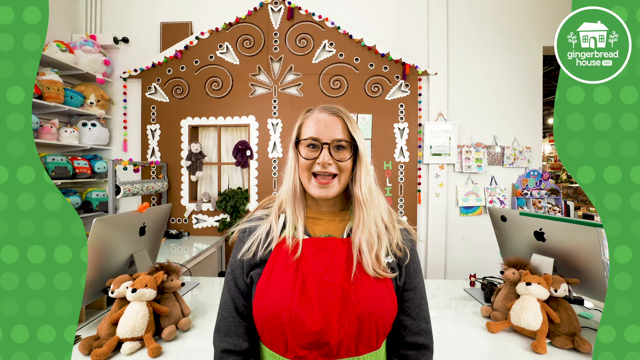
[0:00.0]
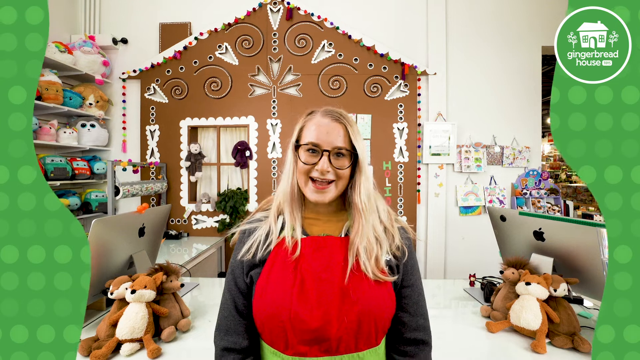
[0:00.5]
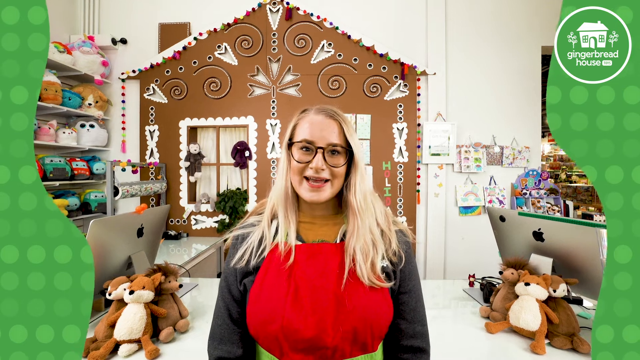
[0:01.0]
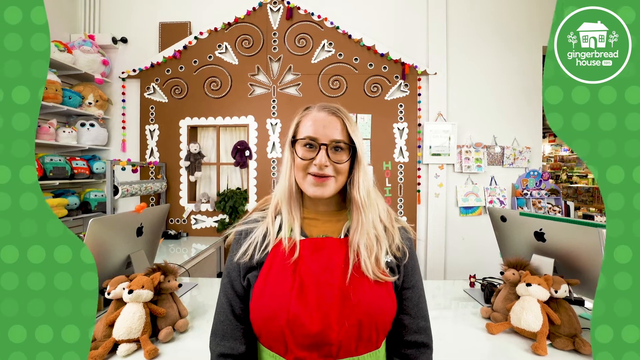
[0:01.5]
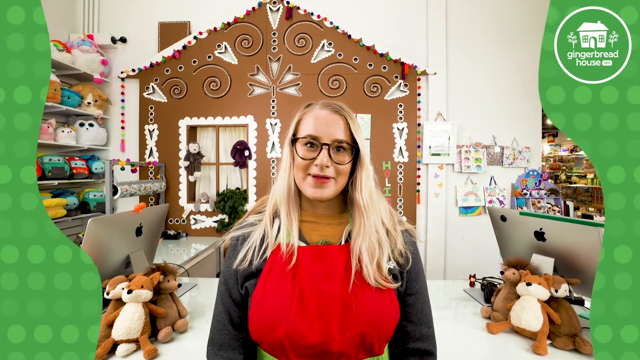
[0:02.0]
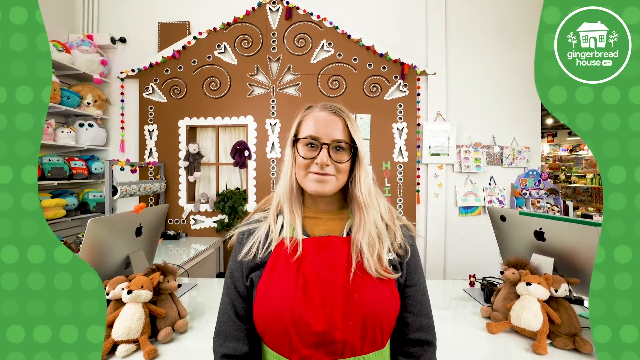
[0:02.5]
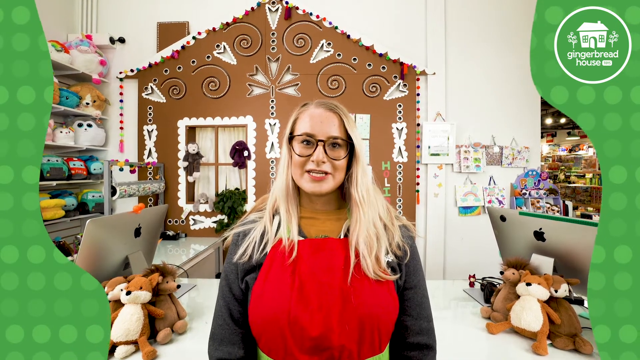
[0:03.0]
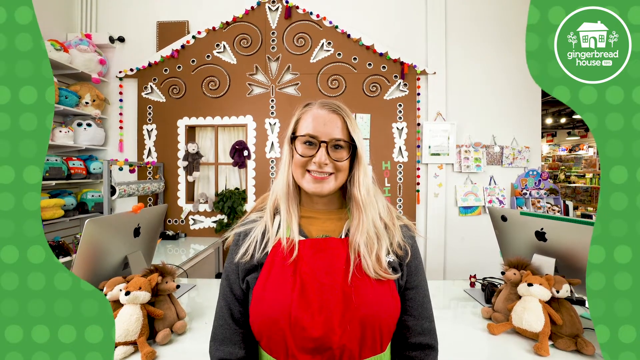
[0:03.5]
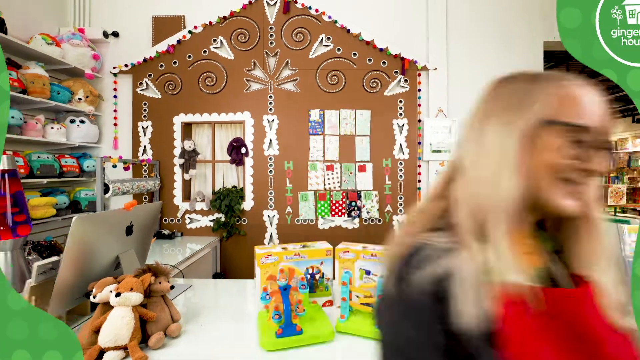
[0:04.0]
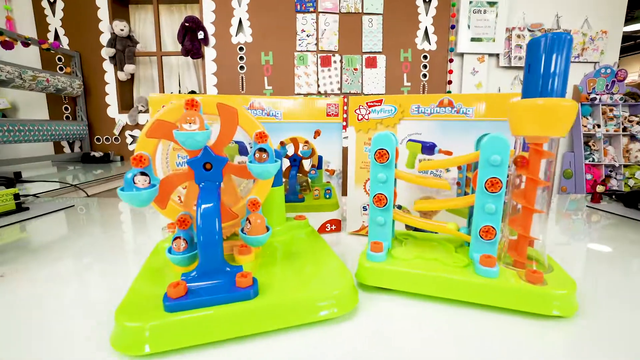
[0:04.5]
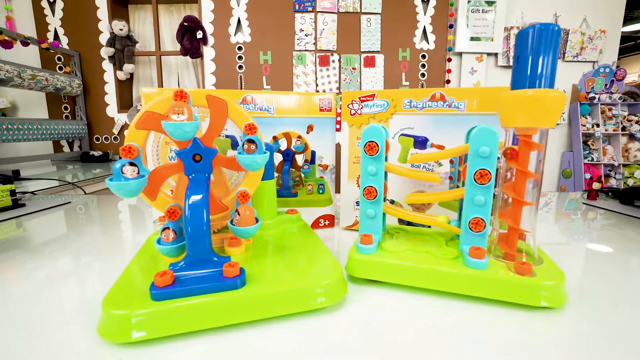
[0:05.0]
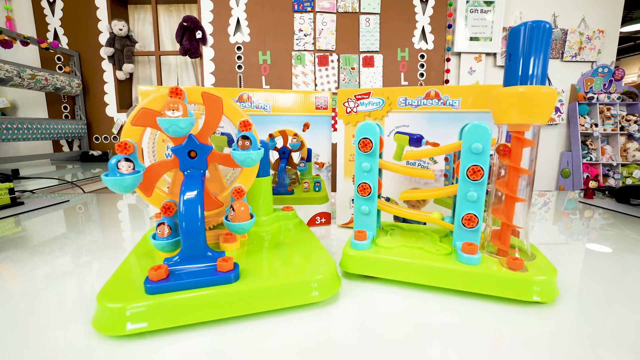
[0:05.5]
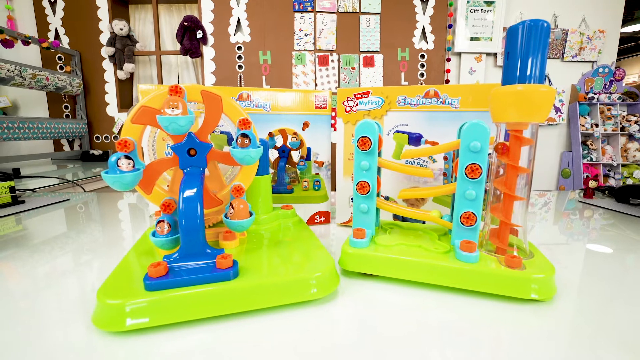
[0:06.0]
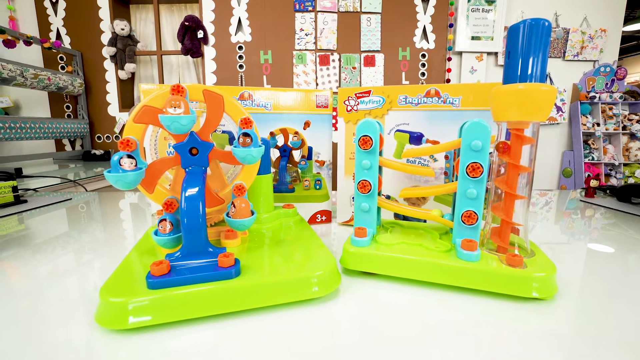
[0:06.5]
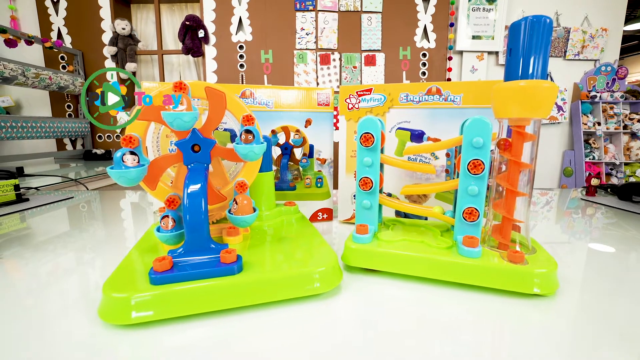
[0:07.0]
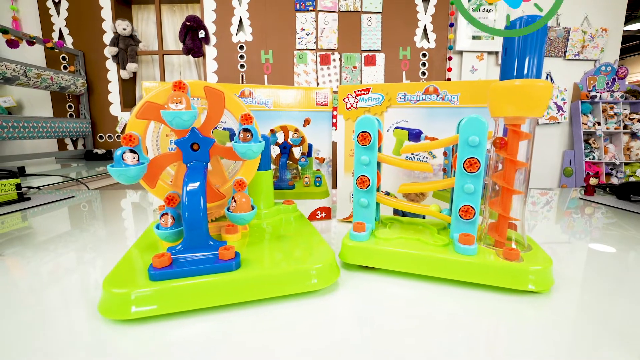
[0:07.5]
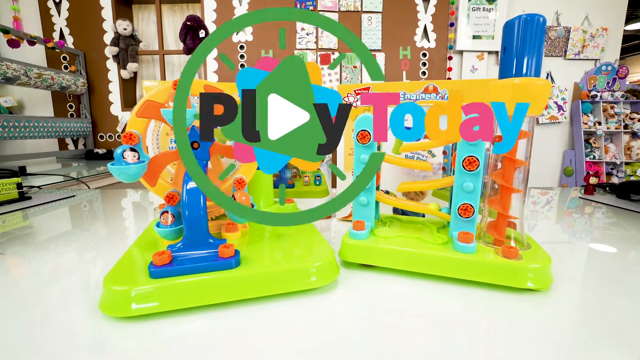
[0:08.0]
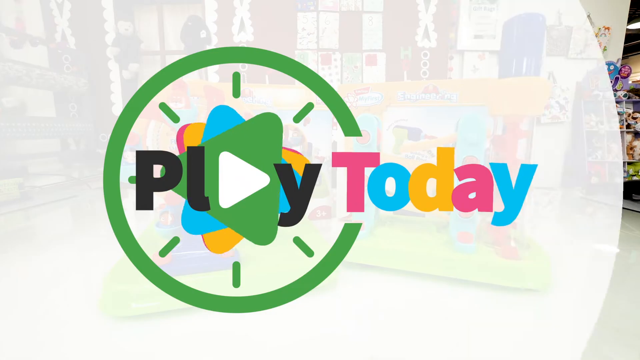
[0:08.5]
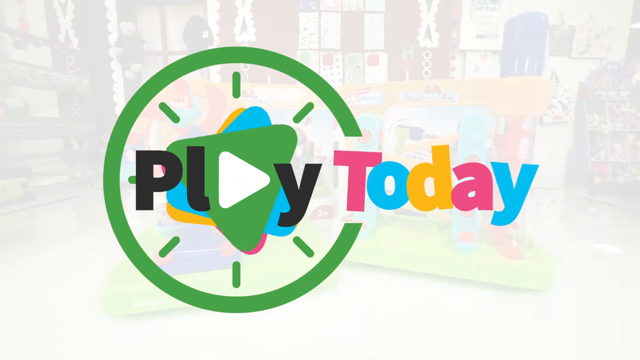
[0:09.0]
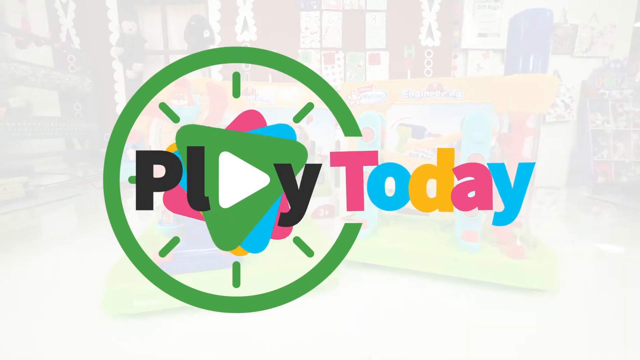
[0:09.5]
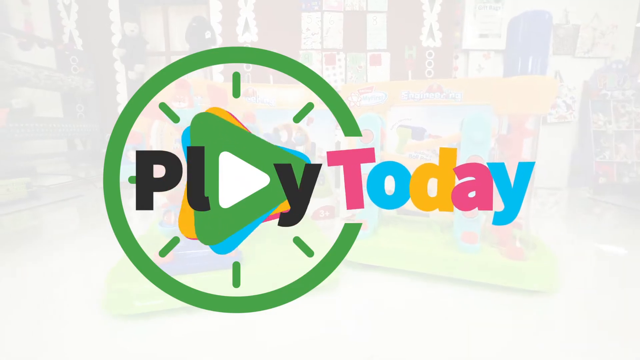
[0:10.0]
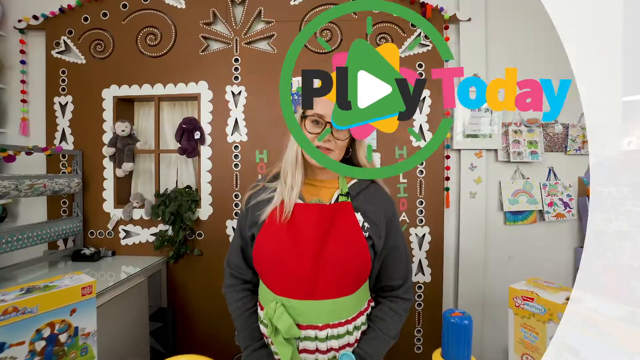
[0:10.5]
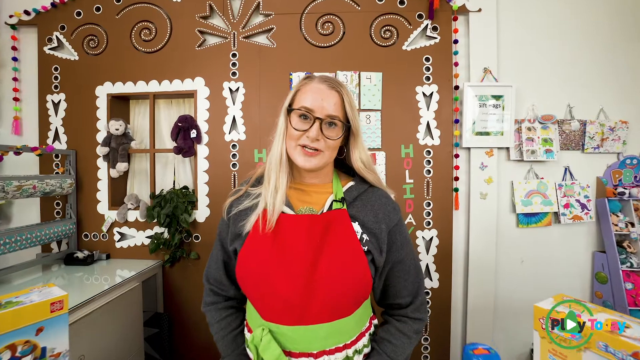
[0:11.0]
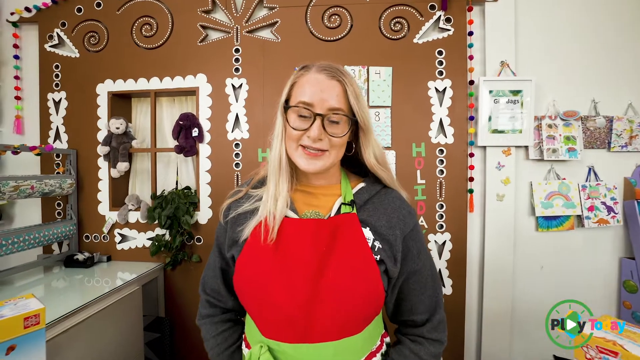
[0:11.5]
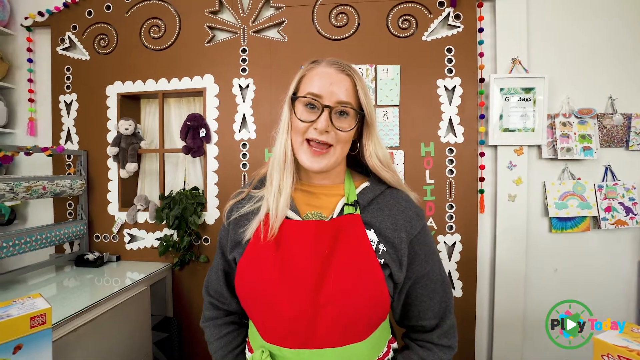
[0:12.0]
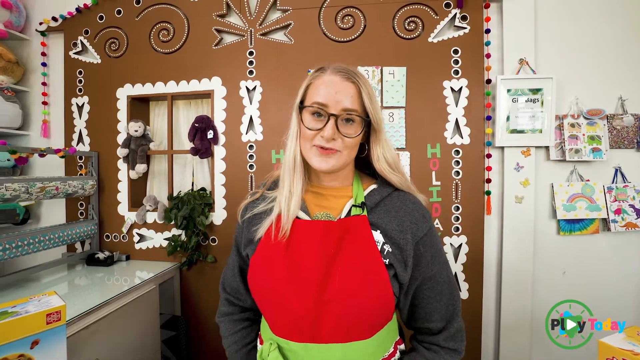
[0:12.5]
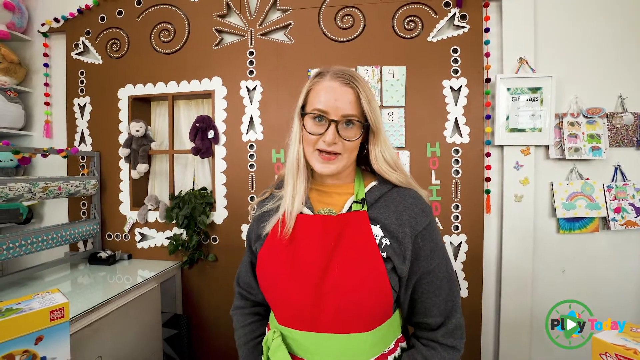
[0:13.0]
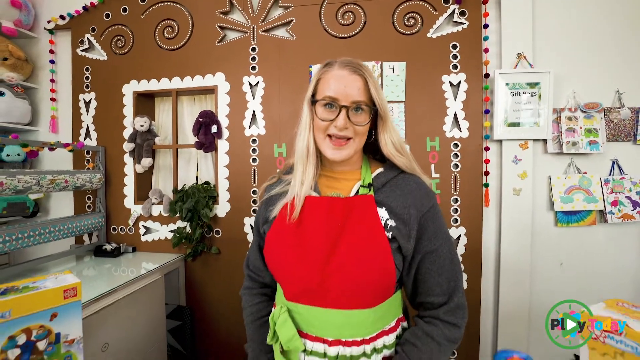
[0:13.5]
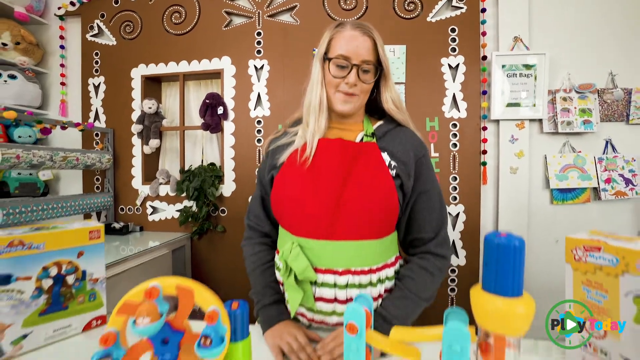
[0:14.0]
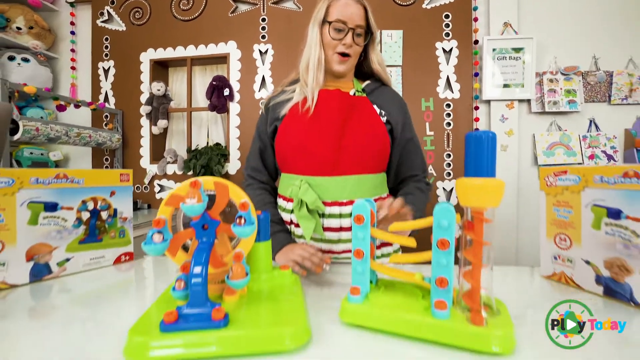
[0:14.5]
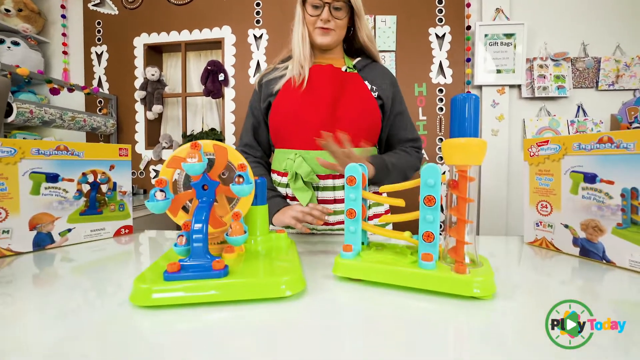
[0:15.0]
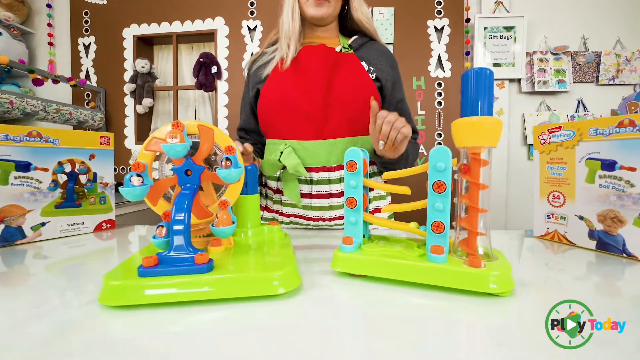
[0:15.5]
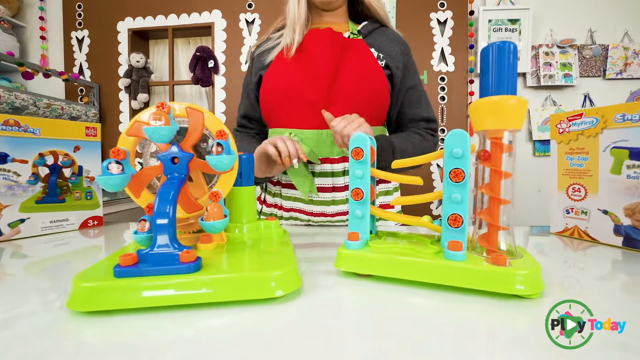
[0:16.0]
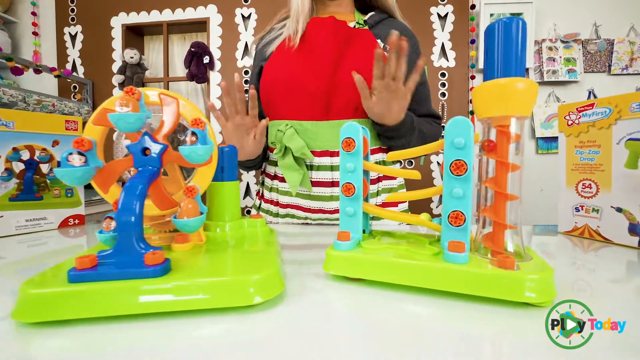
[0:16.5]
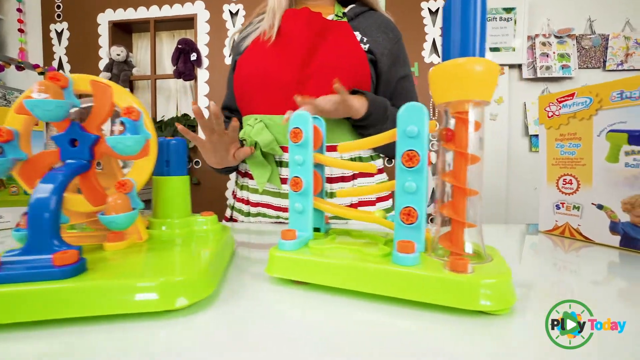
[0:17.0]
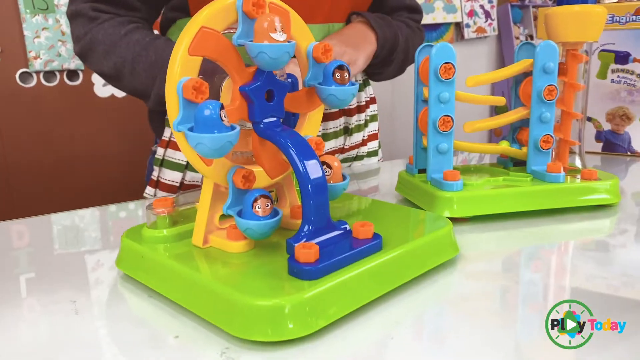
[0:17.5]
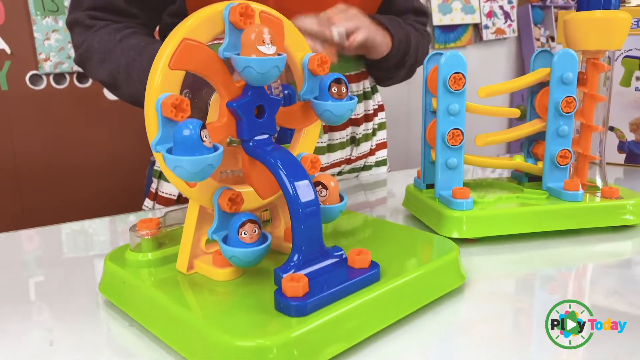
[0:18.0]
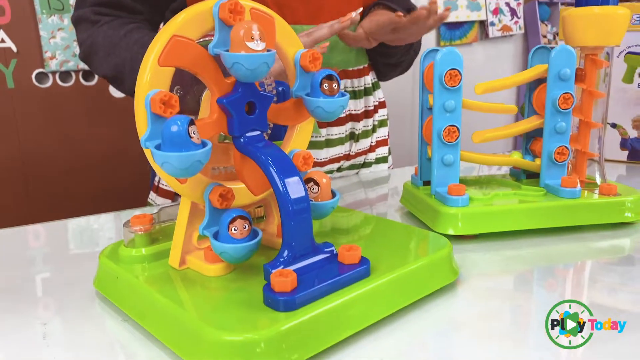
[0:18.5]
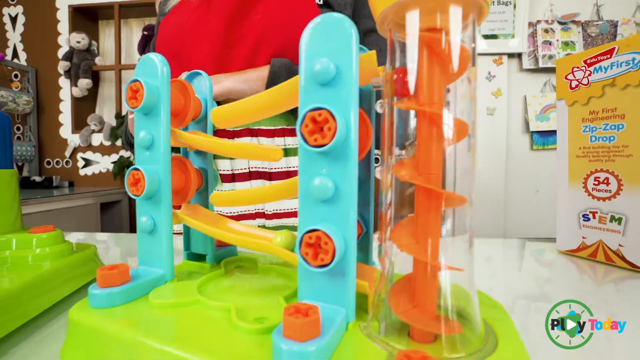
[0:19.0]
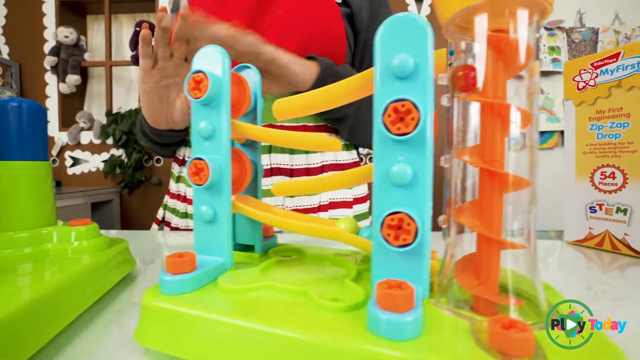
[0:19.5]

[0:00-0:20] A lady presents her toy store, and it is clearly a toy store. She is the only person visible. She moves from one section of the store to another, showing the toys she is presenting or selling. She is a white woman dressed in black with a red apron on top. The shop's name, Gingerbread House, is visible. Many toys fill the background, along with the ones she is showing.